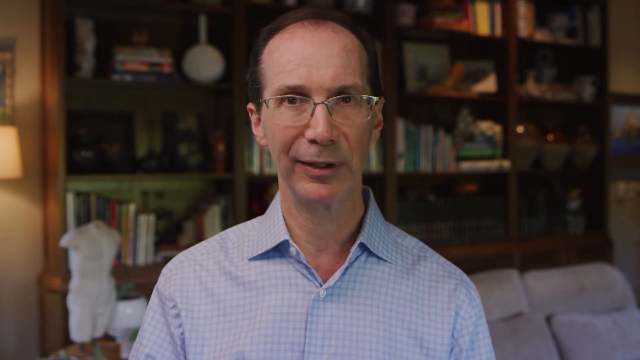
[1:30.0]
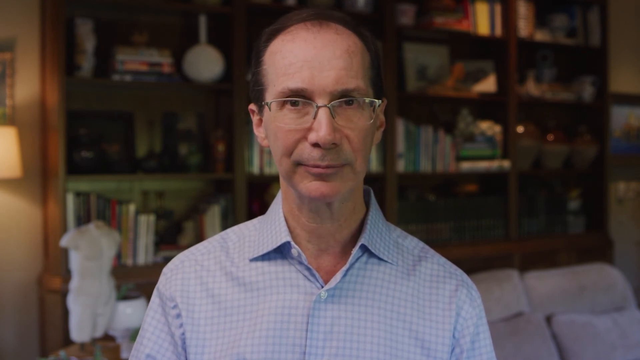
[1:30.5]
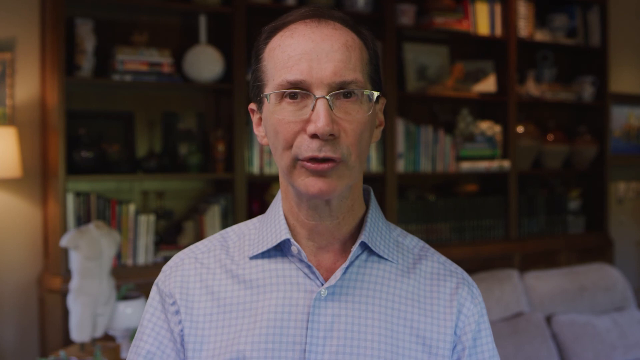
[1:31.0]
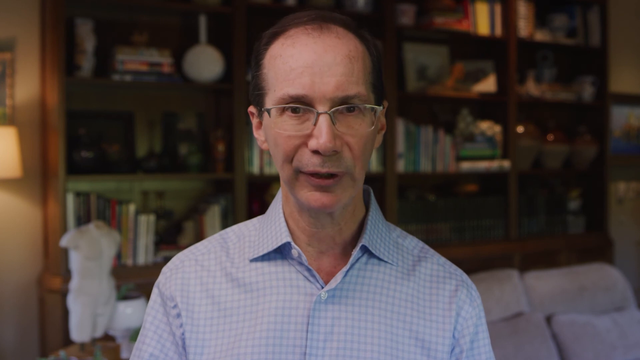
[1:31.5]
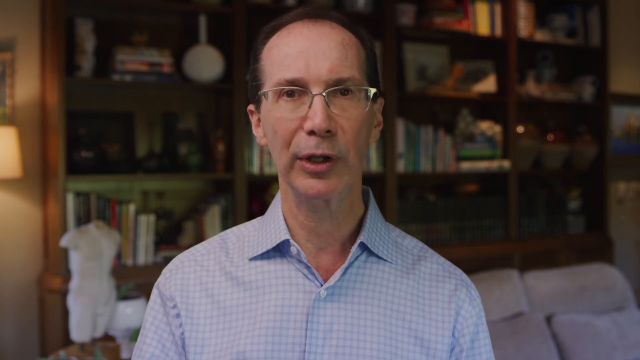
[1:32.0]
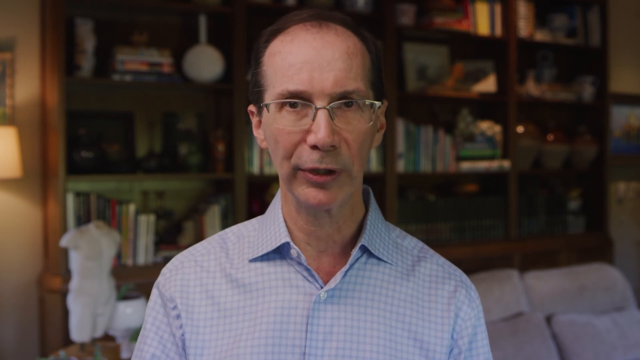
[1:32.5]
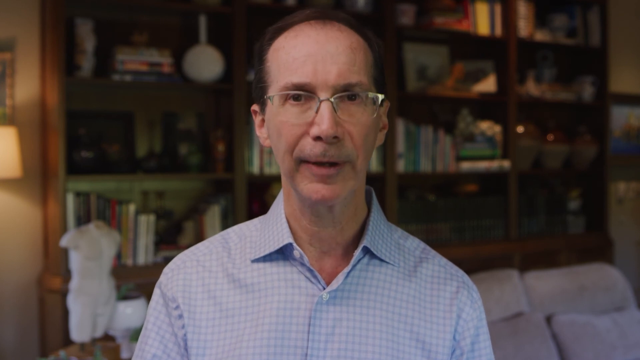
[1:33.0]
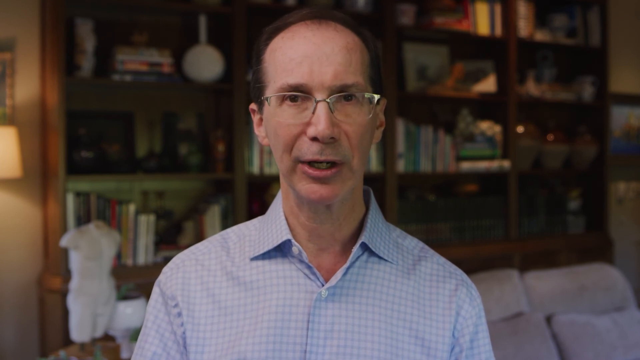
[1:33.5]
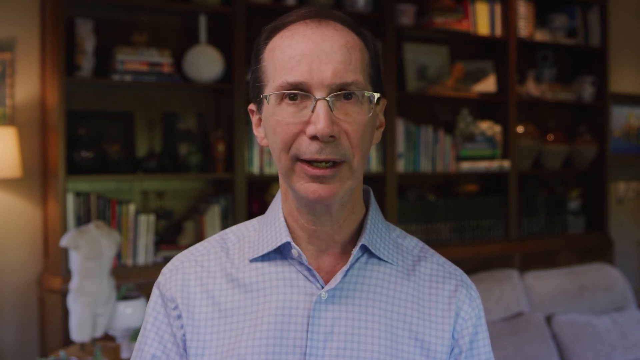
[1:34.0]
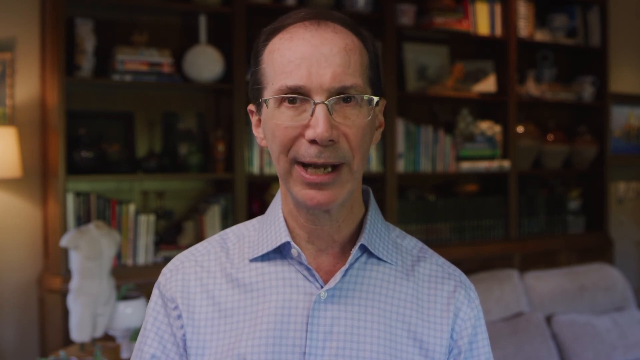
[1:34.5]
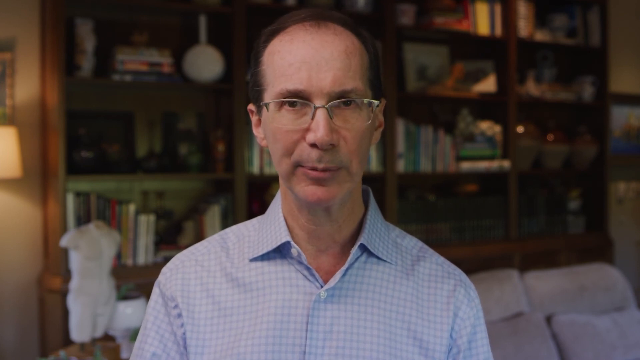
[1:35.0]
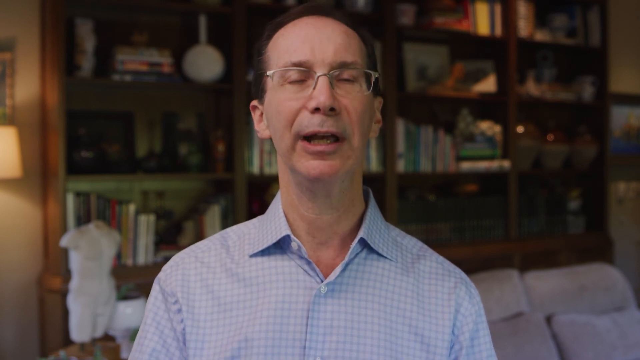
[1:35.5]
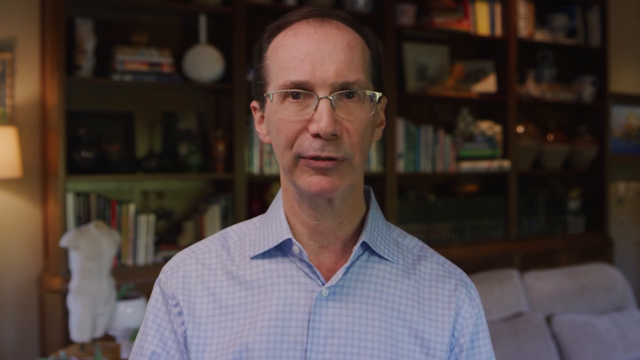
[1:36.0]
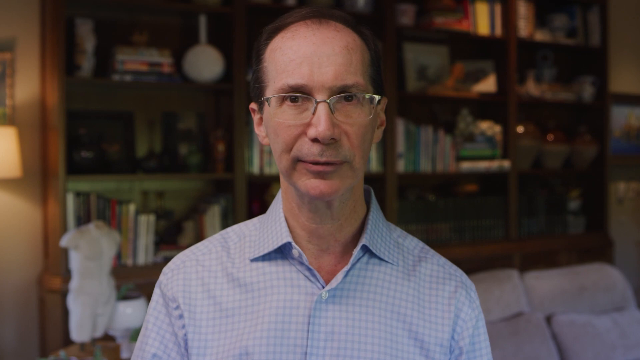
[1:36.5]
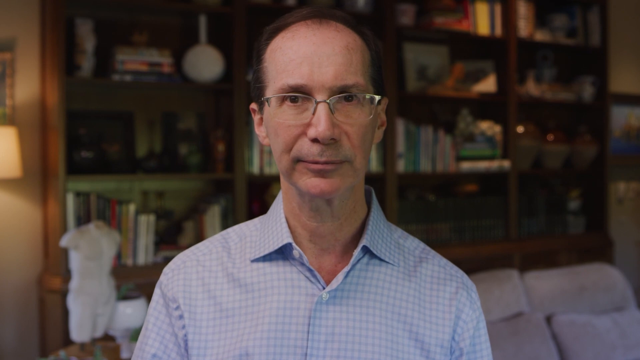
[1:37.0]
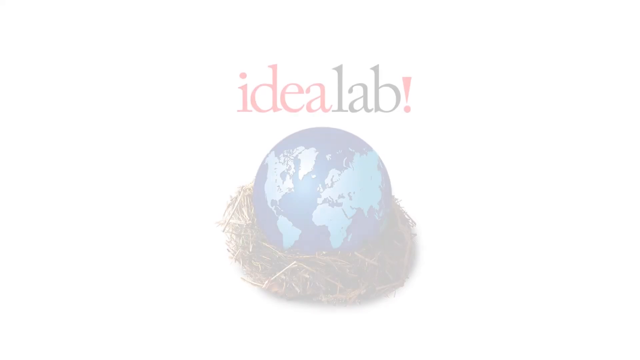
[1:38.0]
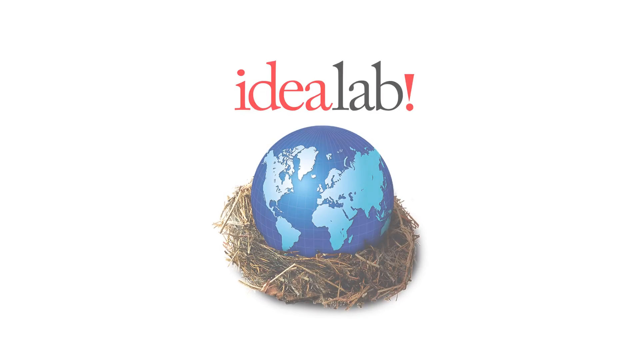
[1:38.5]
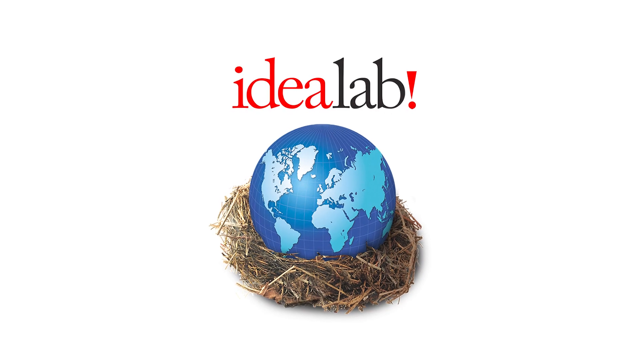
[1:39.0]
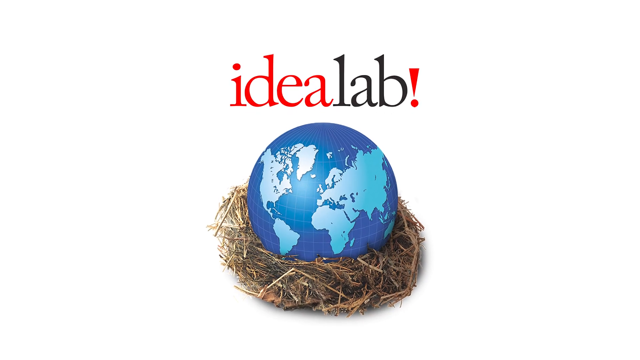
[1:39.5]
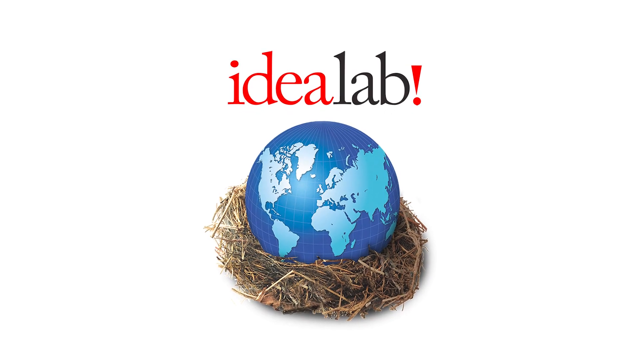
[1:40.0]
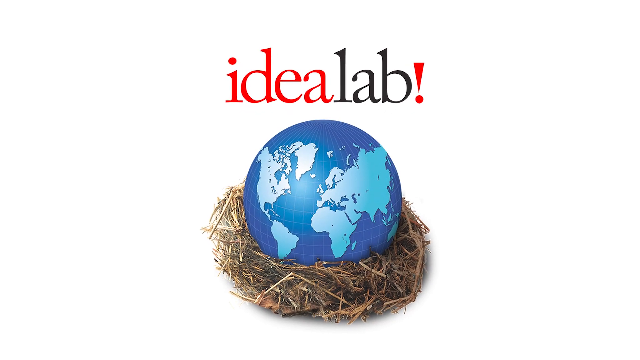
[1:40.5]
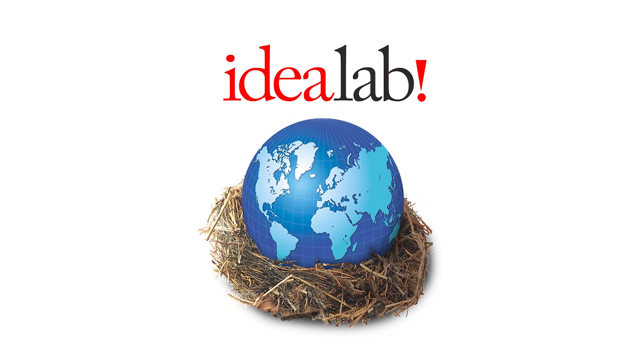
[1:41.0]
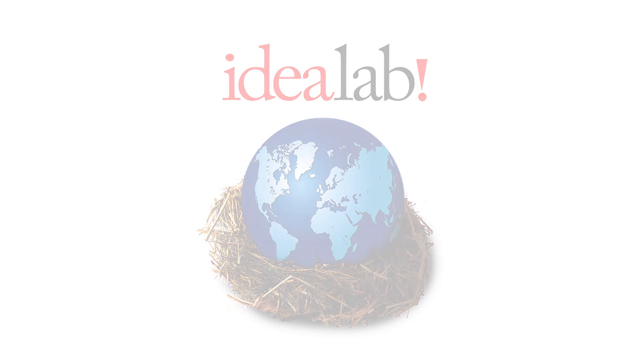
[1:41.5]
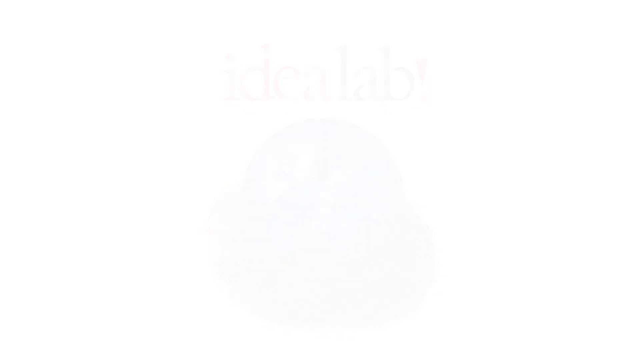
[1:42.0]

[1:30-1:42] The man continues speaking. He appears to be between 55 and 60 years old, wears eyeglasses and a blue and white dress shirt, has brown hair, and is sitting down. Directly behind him is a blurred image of various shelving with books on the shelves, and on the left is a partial image of some sort of lighting. The video ends with the Idealab logo, with a picture of a globe inside a nest underneath the Idealab title.